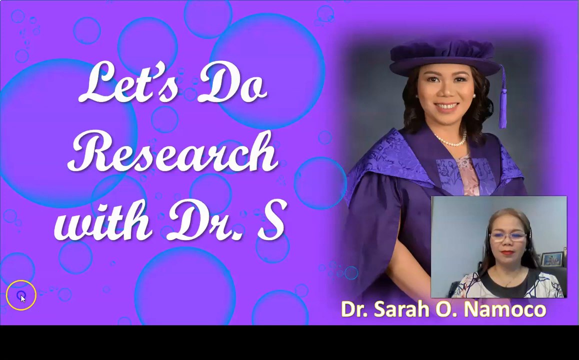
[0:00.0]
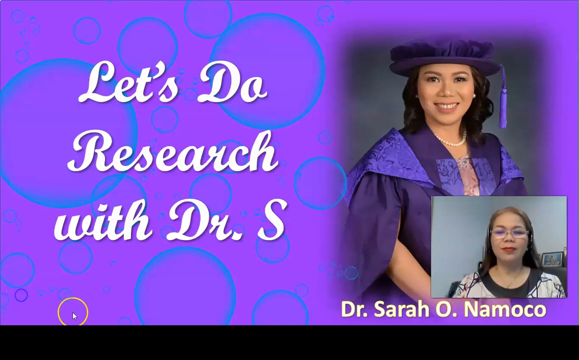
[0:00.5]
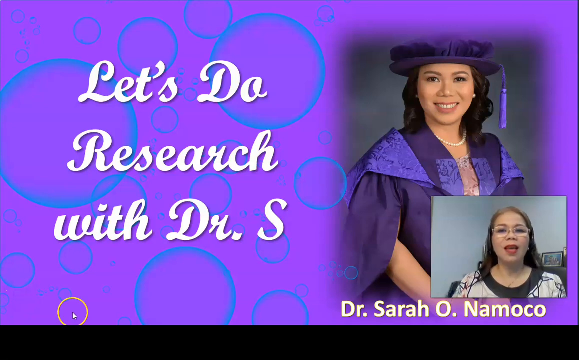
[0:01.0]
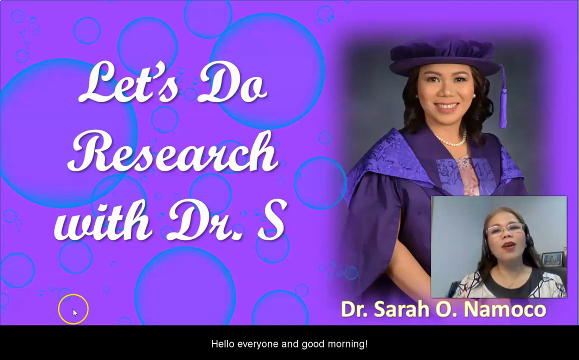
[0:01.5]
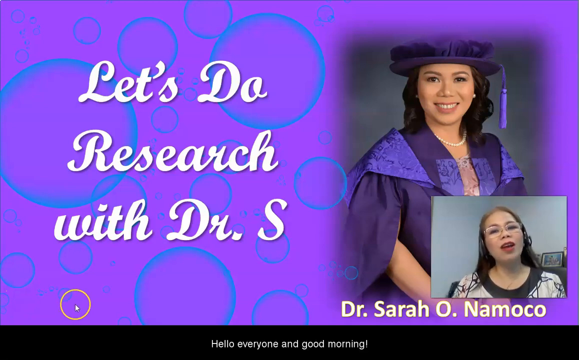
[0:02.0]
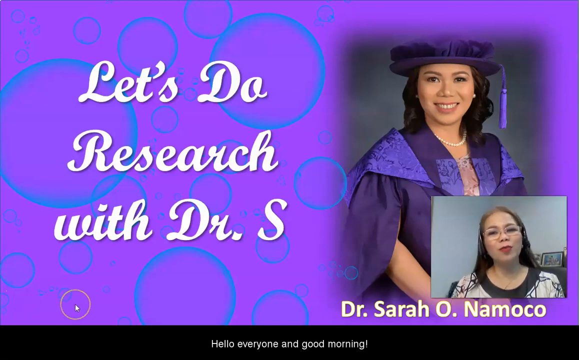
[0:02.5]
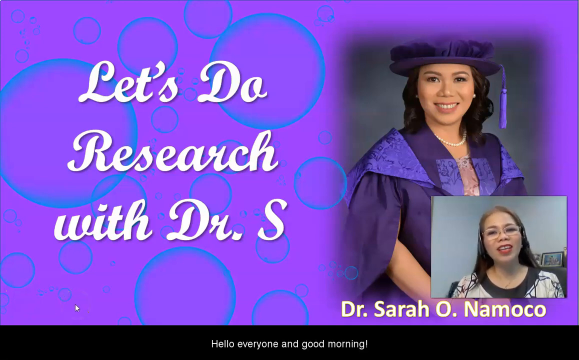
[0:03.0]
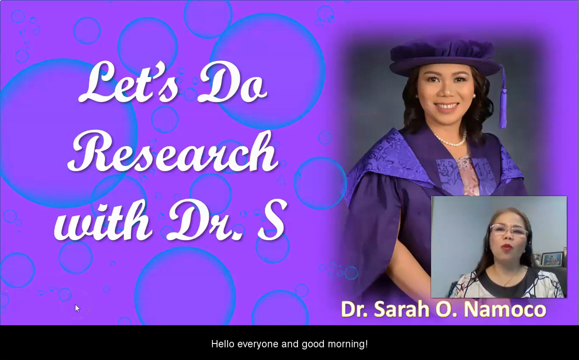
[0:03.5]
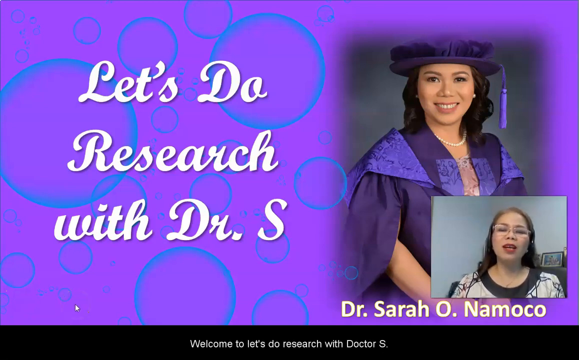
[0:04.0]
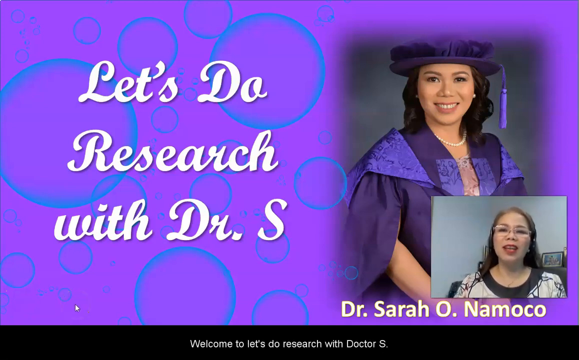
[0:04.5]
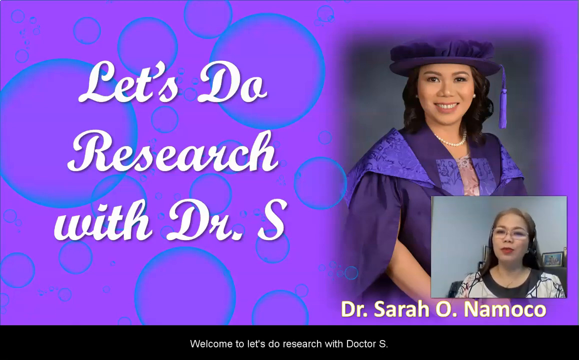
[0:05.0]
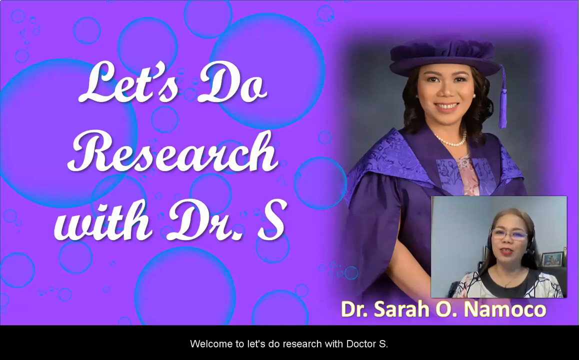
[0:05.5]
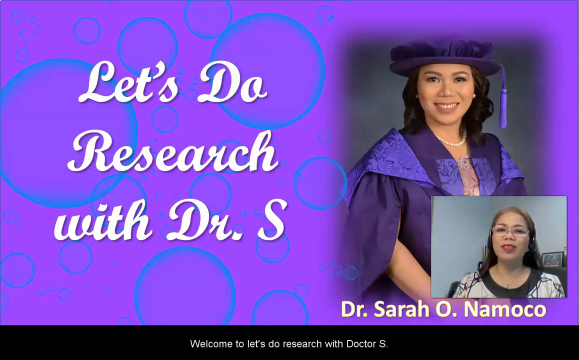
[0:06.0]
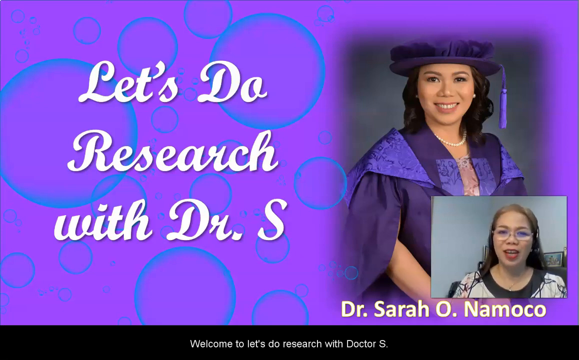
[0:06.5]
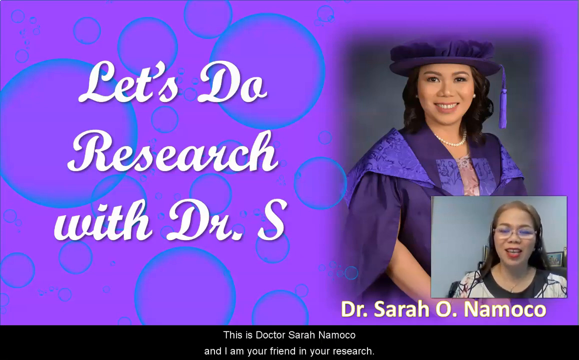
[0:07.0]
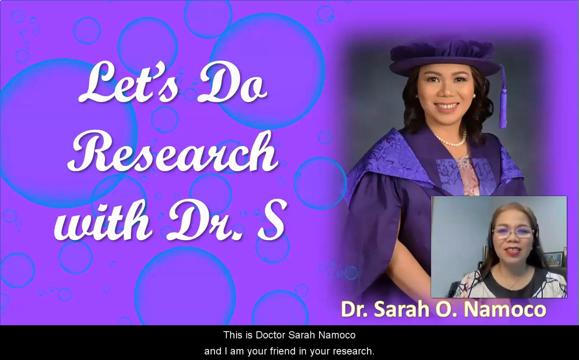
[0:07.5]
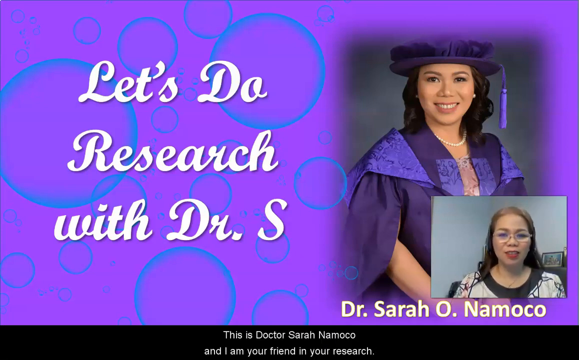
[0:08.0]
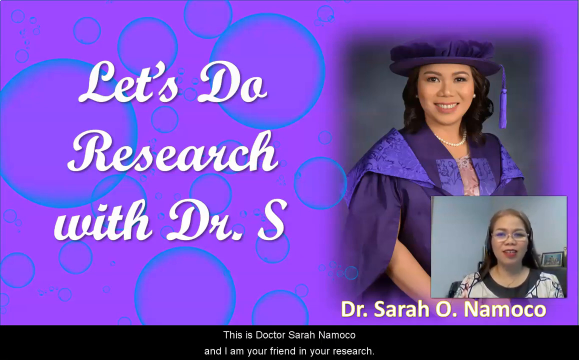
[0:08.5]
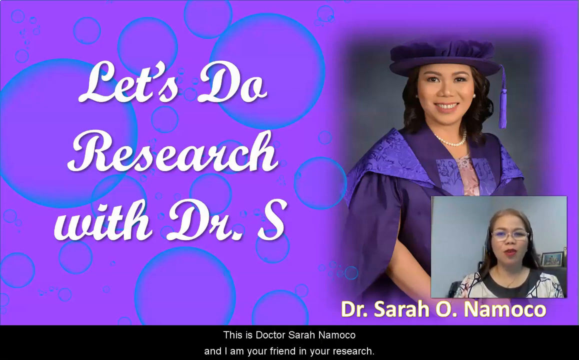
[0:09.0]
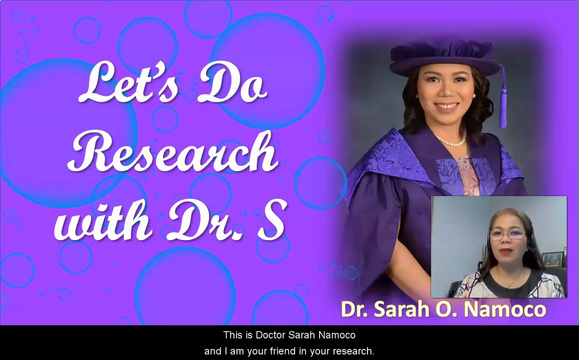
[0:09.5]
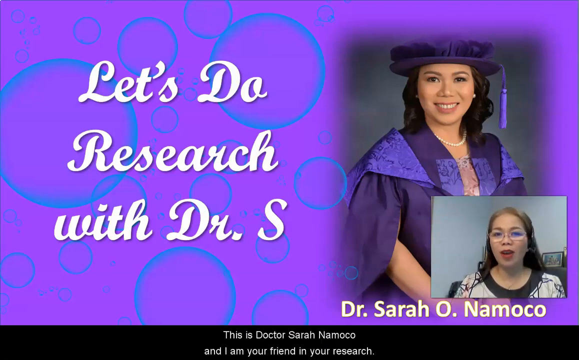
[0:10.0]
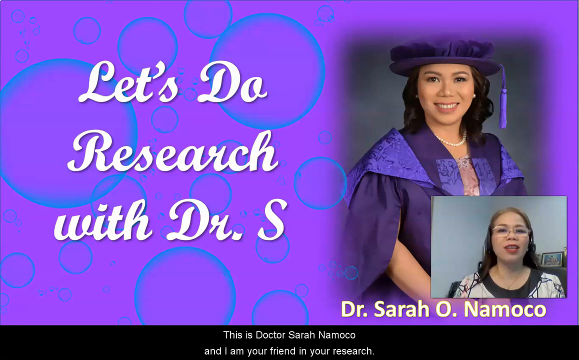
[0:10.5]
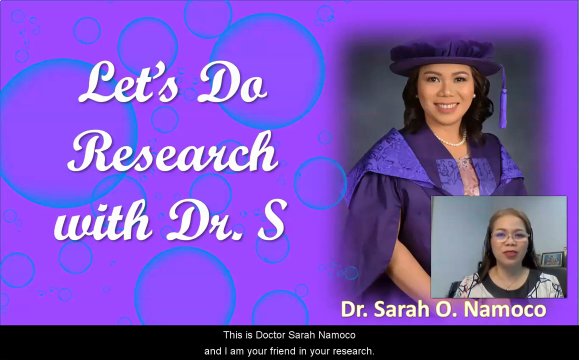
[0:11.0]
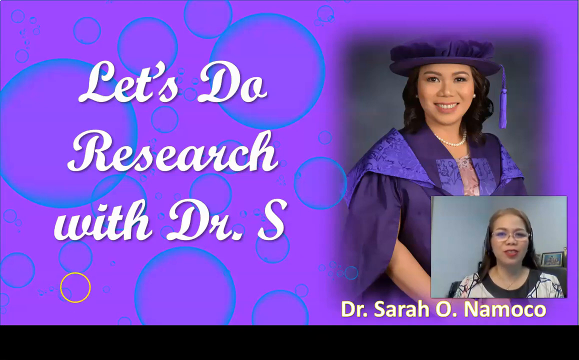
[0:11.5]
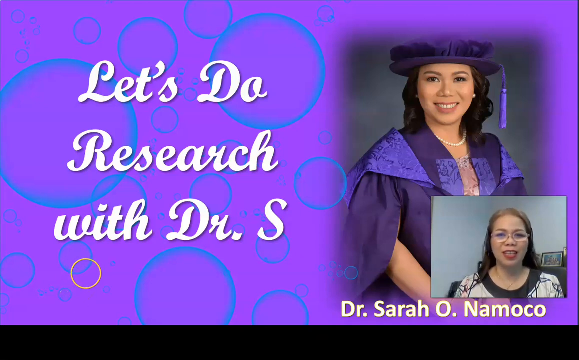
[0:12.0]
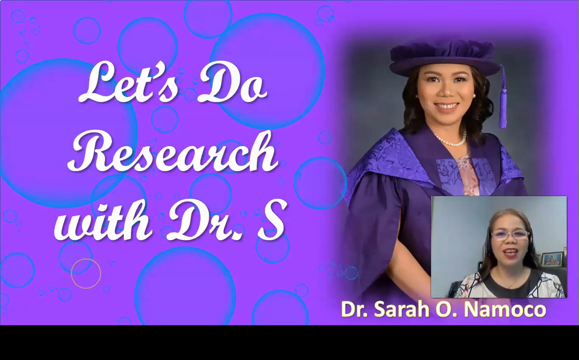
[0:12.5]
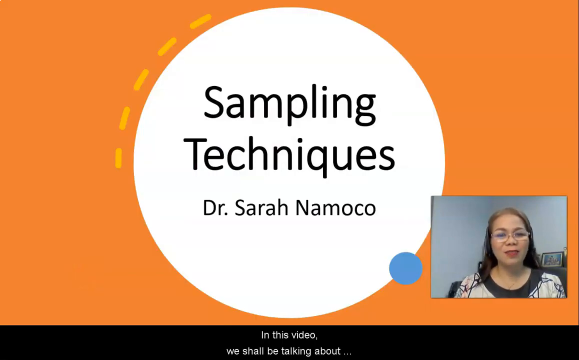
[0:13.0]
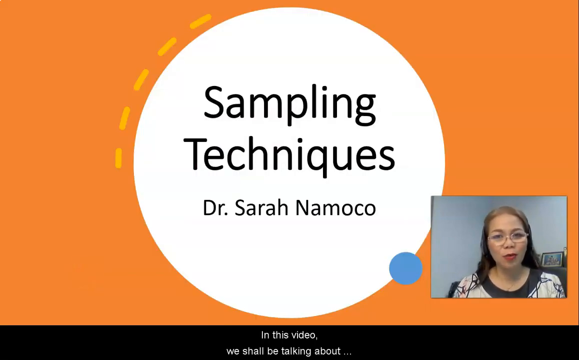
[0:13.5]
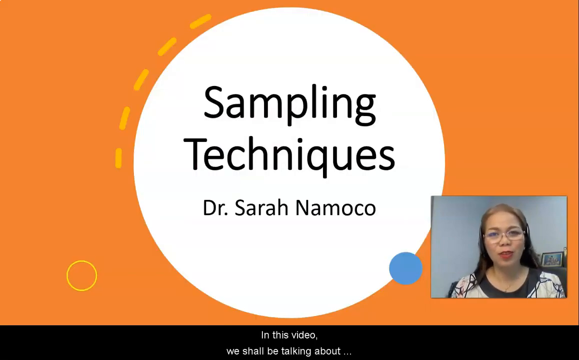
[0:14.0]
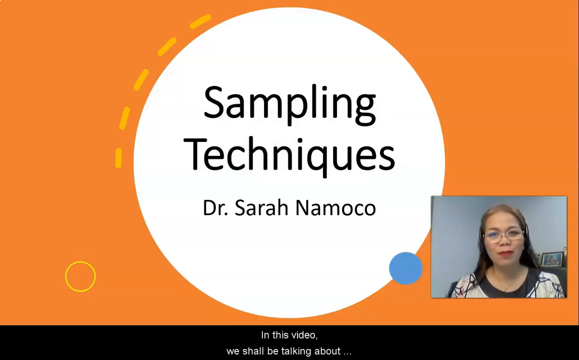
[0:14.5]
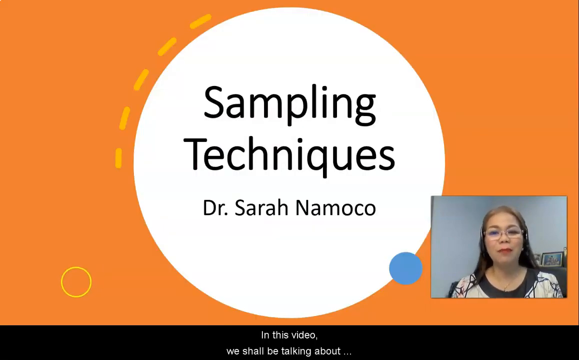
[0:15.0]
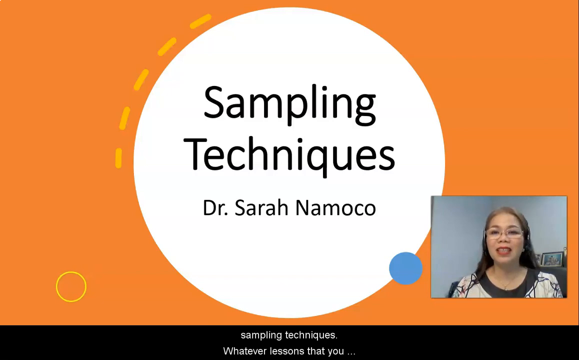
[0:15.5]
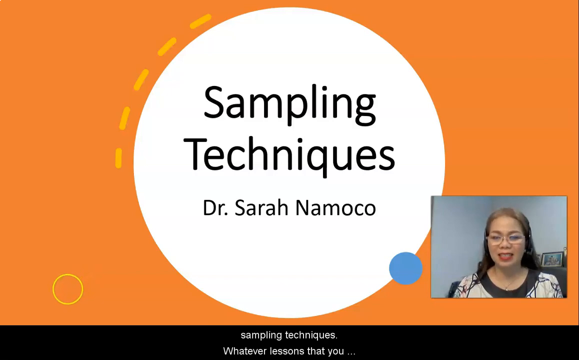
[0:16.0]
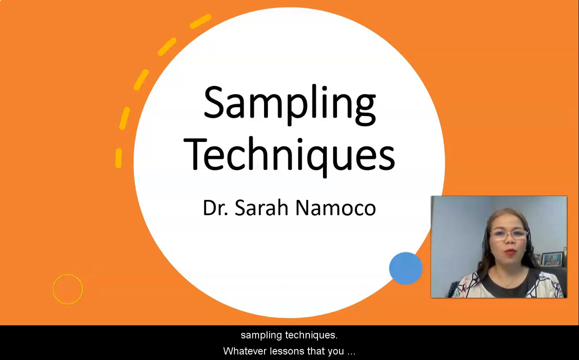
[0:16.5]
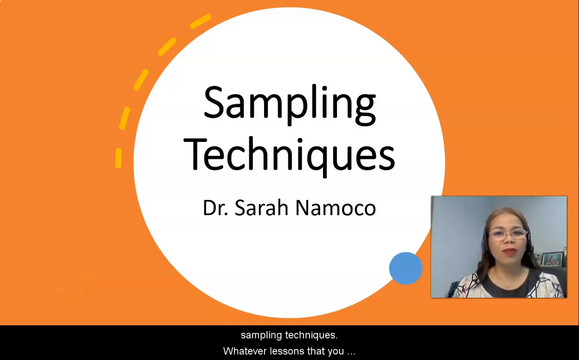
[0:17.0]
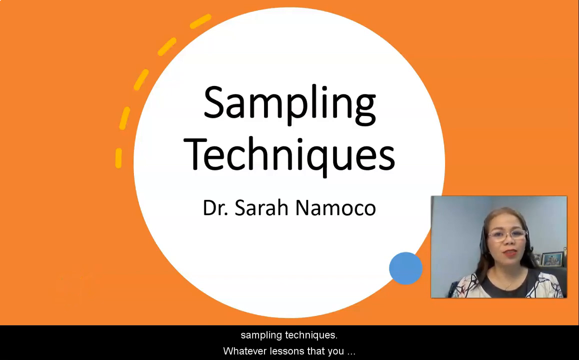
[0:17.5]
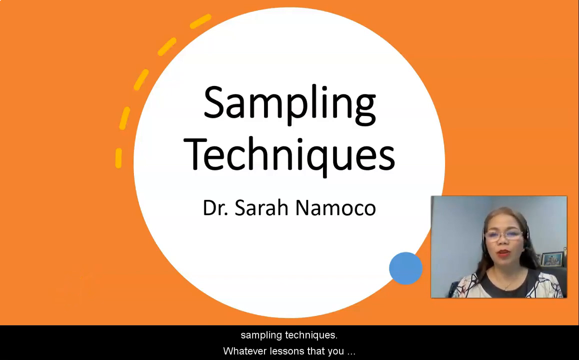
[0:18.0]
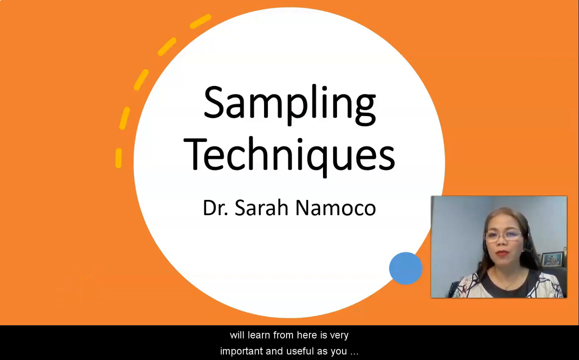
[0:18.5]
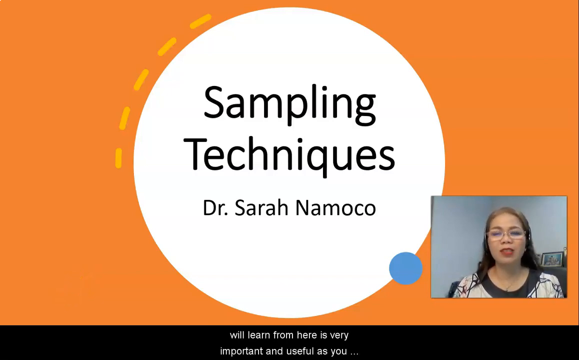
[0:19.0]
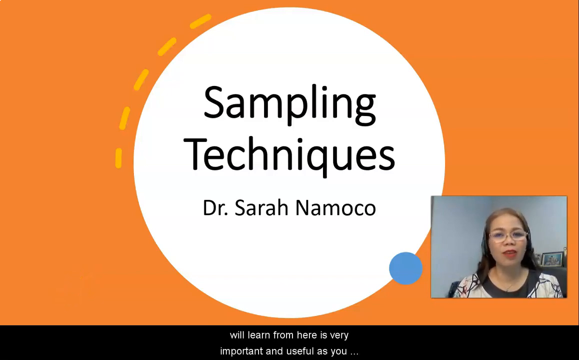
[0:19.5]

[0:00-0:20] The video opens on a purple background with blue bubbles and white text on the left side reading "Let's do research with Dr. S." On the right side is a graduation photo of a woman labeled "Dr. Sarah O. Namoco." A webcam overlay in the bottom right corner shows the same woman, who has dark brunette hair and wears a white blouse and white glasses, speaking to the camera. A cursor, marked by an outline of a yellow circle, is visible in the lower left corner of the screen. The slide changes to an orange background with a white circle in the middle containing black text reading "Sampling techniques Dr. Sarah Namoco." It appears to be an educational video about research and data techniques and skills.